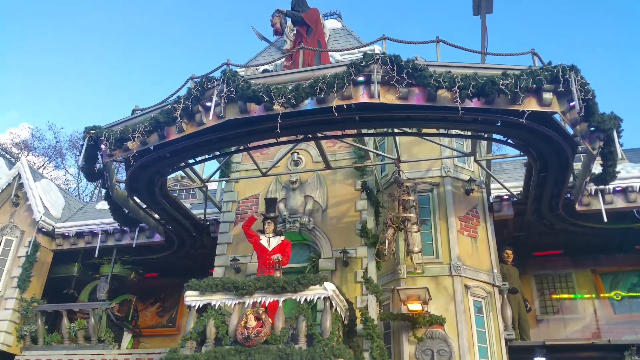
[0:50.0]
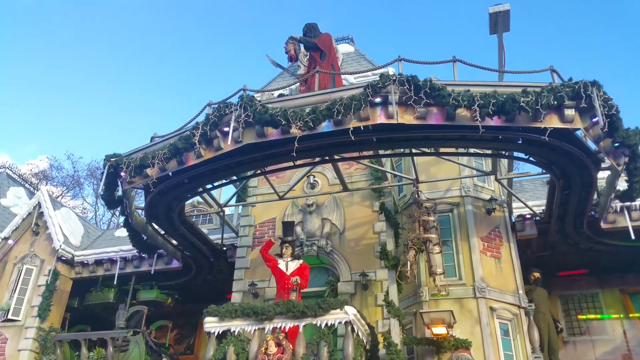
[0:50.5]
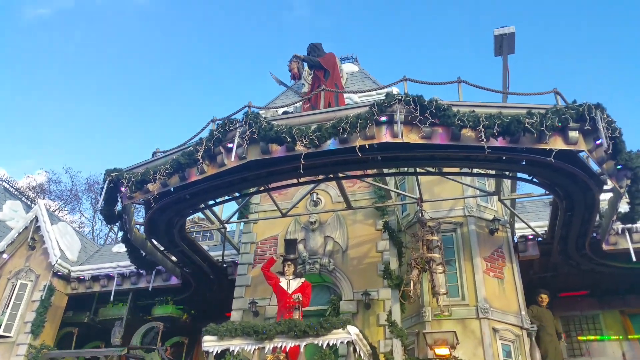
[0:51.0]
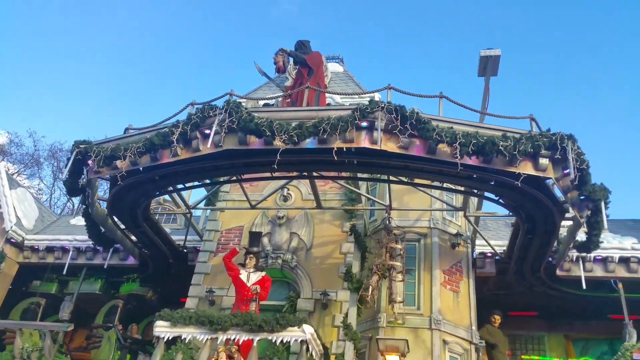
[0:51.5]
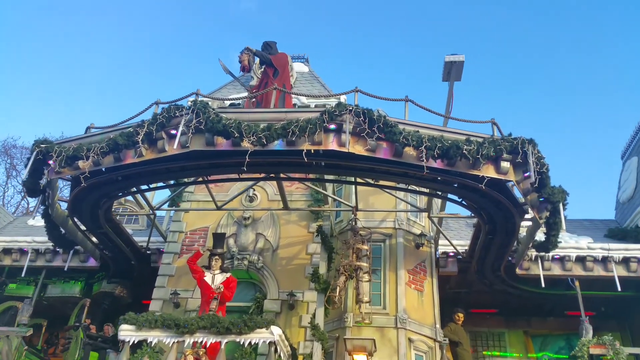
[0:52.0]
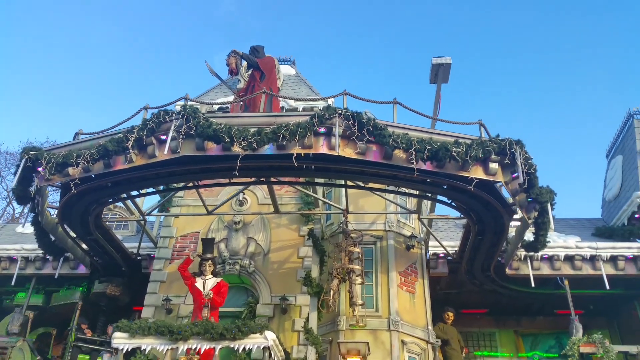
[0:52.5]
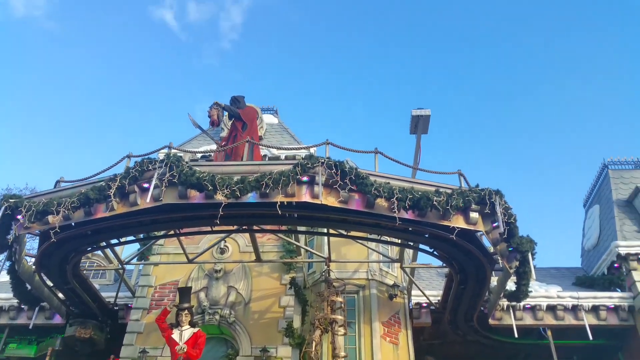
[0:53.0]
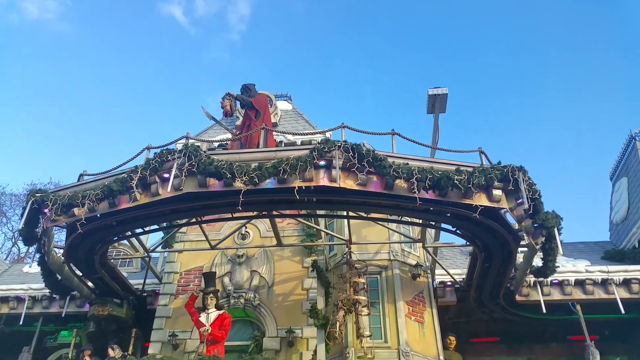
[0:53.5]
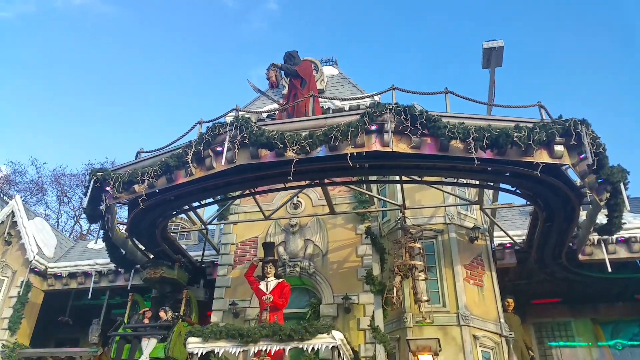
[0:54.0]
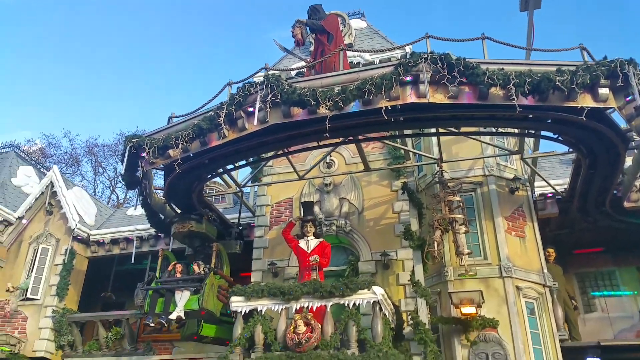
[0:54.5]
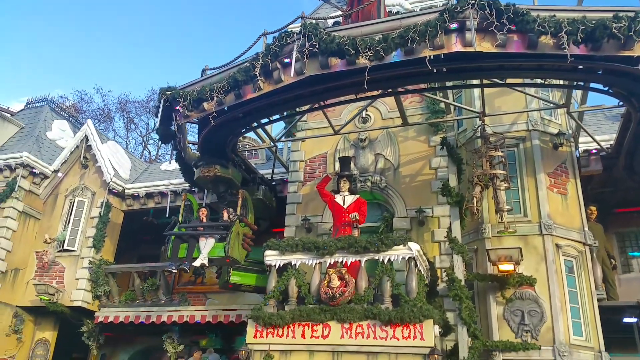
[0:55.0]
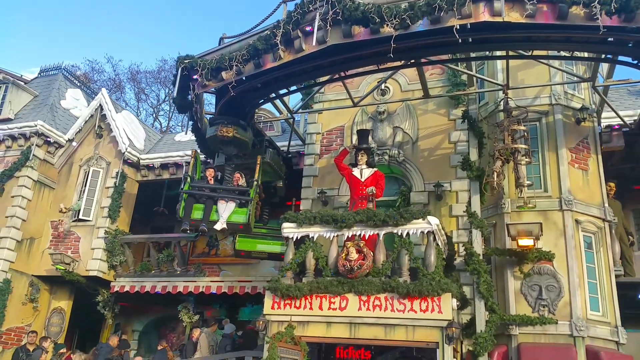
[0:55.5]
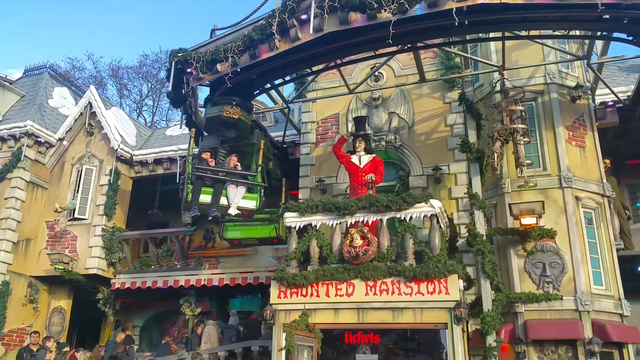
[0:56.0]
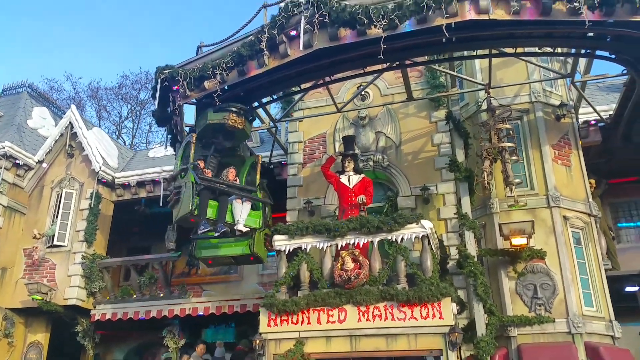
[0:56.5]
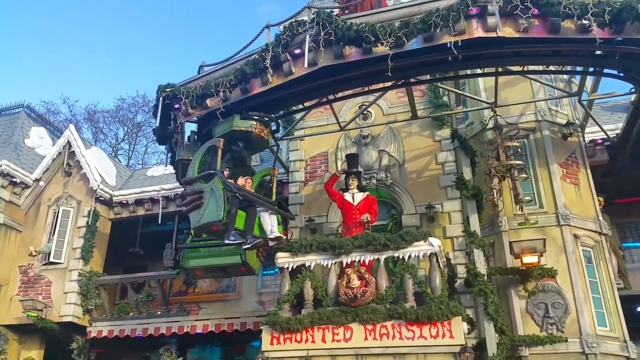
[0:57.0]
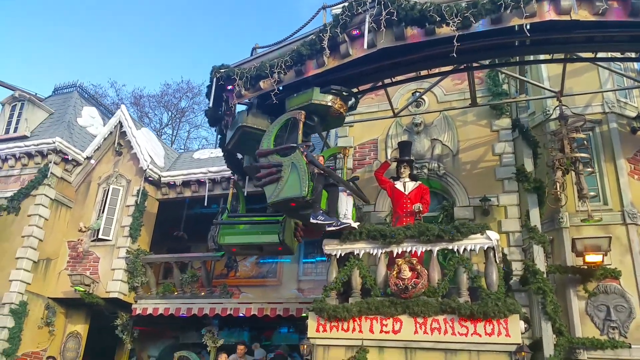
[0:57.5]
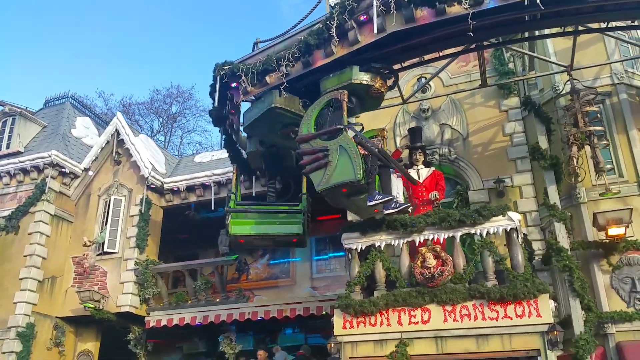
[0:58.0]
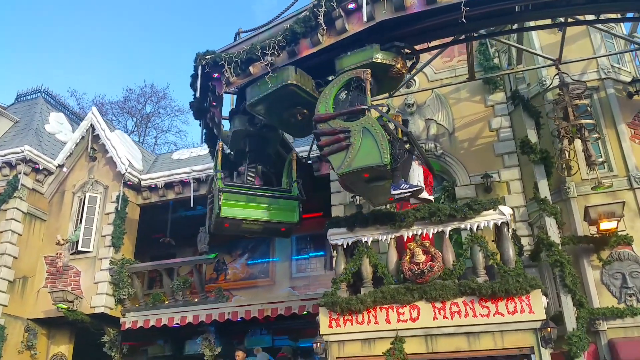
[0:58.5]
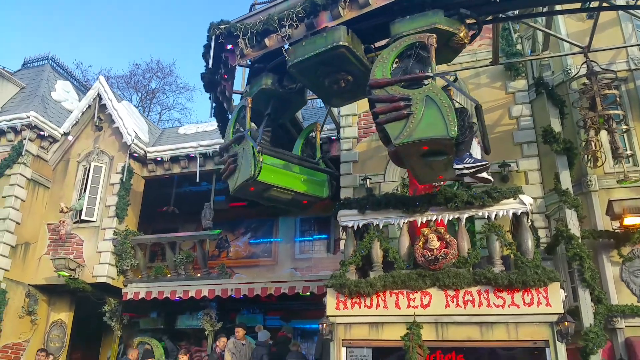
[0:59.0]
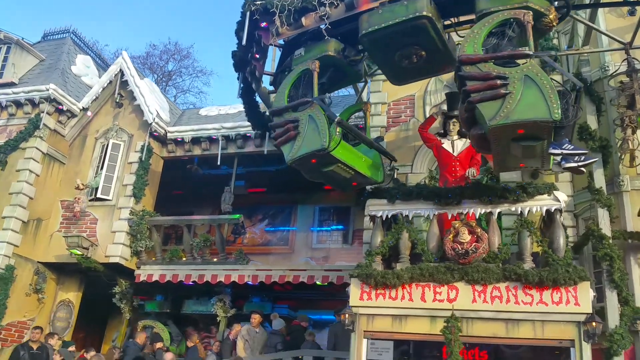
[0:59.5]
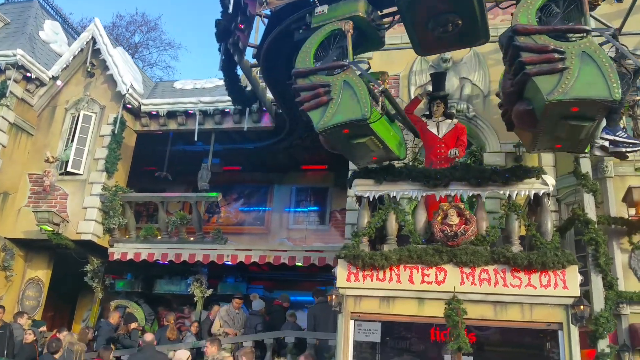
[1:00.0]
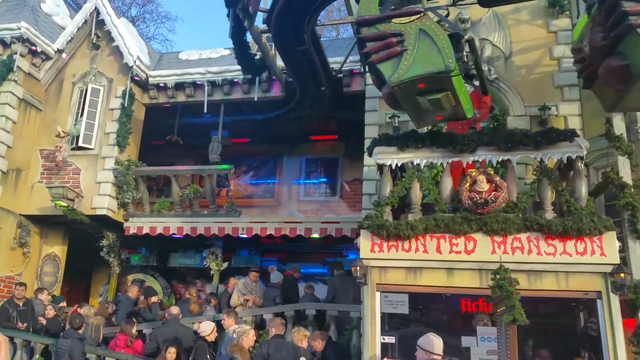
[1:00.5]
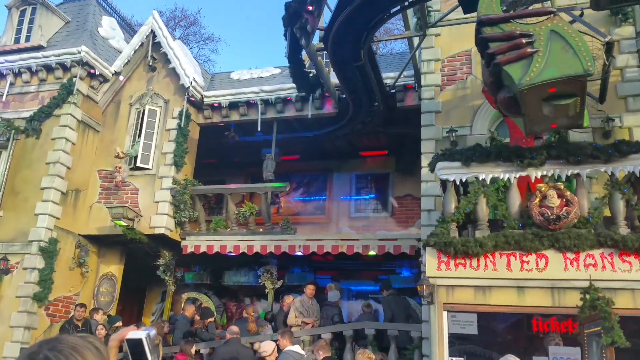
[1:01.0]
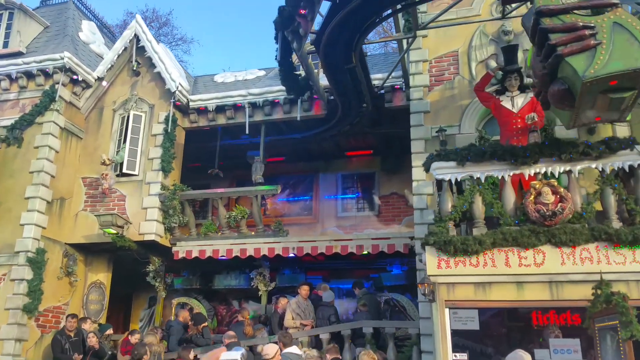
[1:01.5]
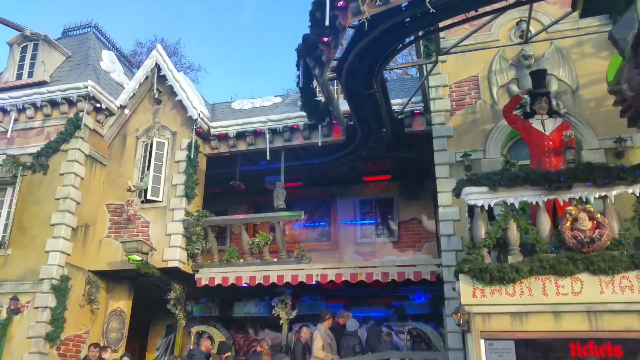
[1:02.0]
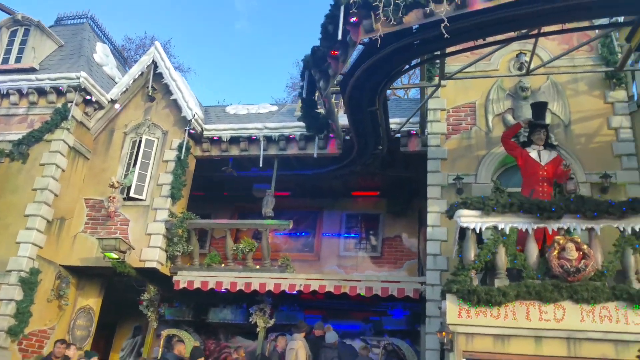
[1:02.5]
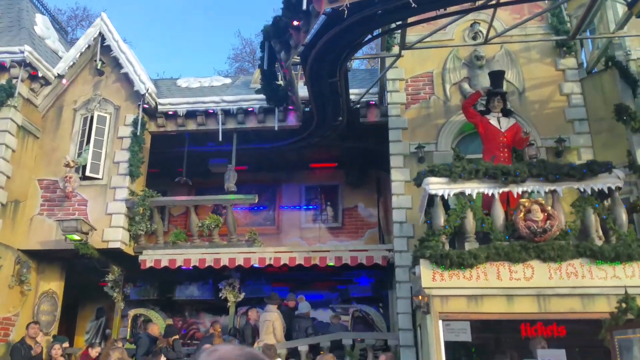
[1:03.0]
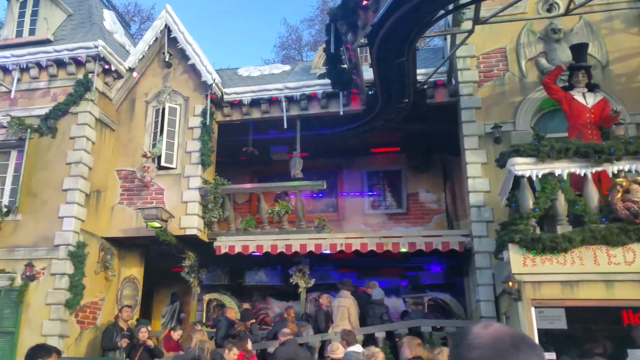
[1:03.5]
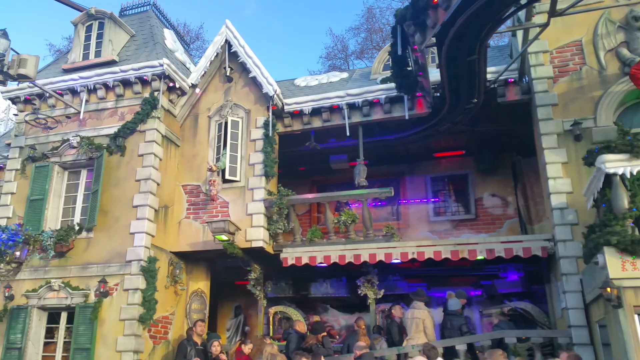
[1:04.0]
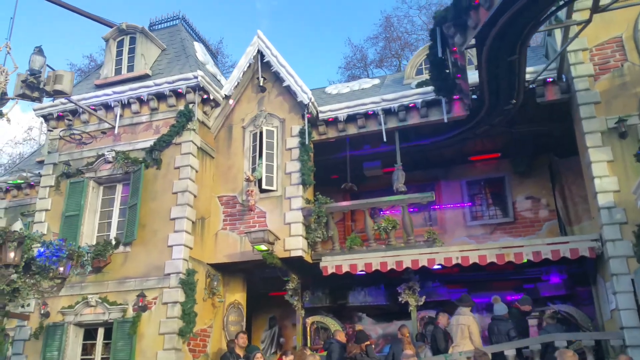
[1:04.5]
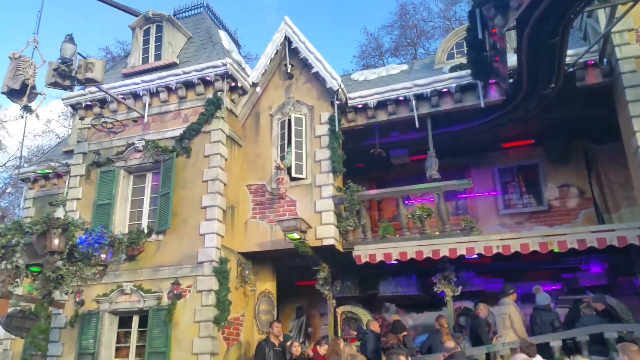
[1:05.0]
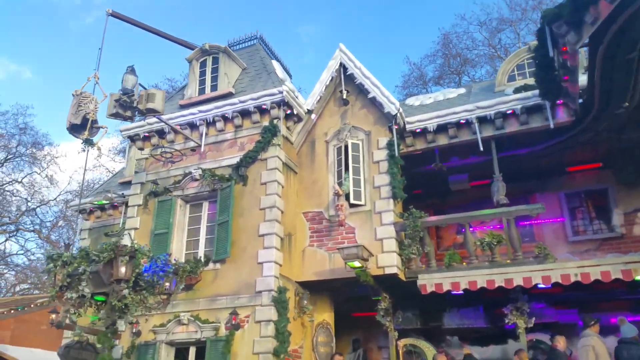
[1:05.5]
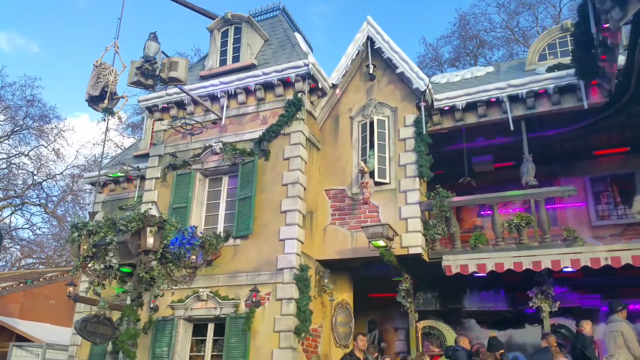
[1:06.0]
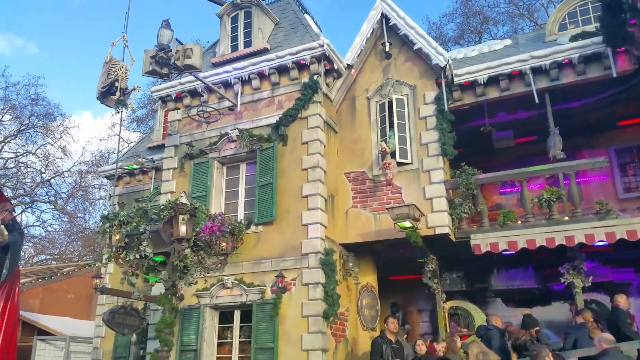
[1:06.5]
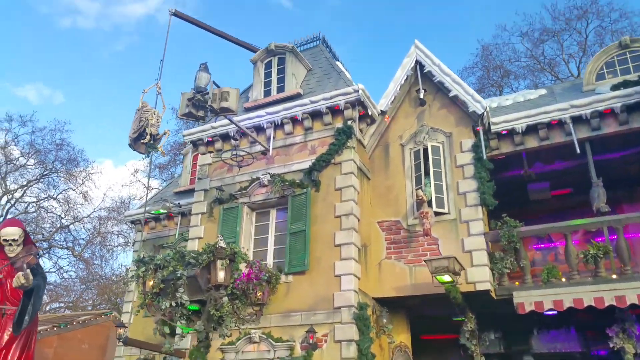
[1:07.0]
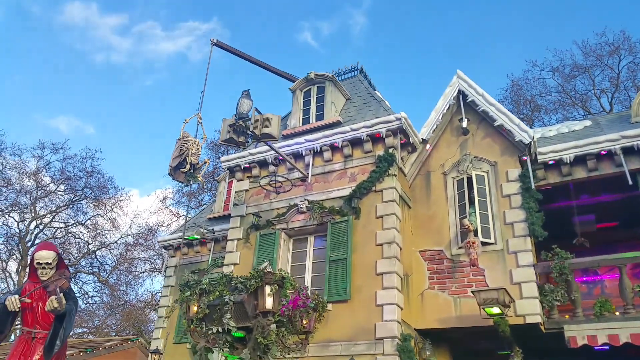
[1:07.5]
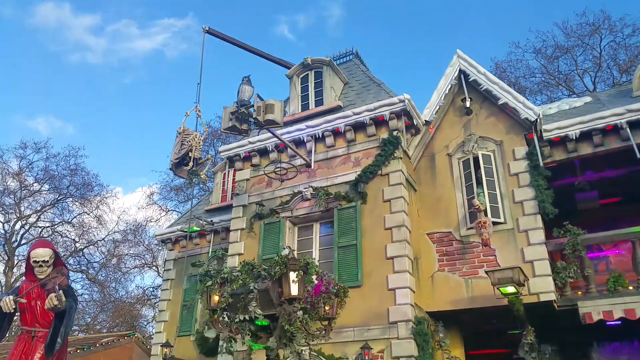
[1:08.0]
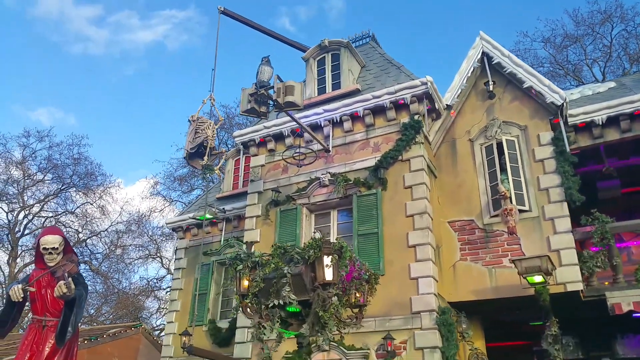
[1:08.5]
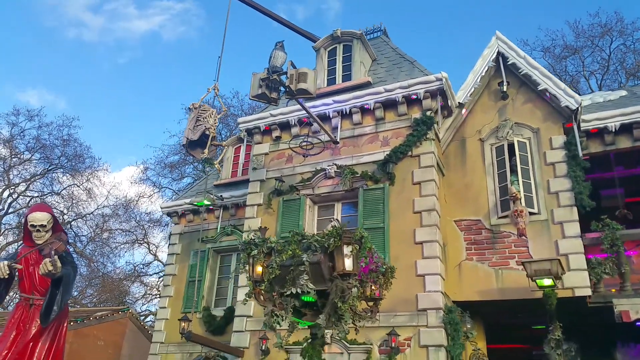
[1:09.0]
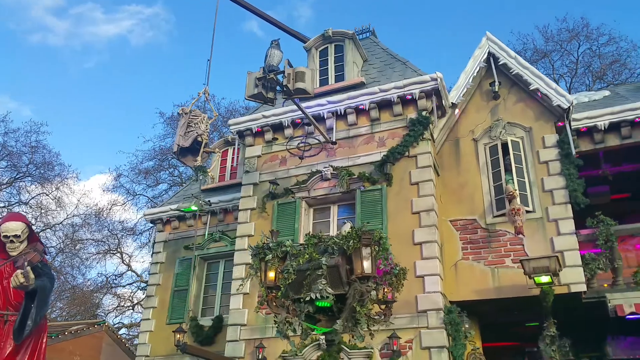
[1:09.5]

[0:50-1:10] The view is on the center of the home. A green trolley comes across the screen holding two people, while the back trolley is empty. The text "haunted mansion" is in the center of the home, underneath a balcony where a man dressed in red and white with a black top hat stands, pointing to or holding his hat. On the level above, on another balcony, a man in a red cloak takes off his mask and holds a sword. The trolley goes across through the rooms, and people on the lower level get a closer look at the mansion. A skeleton on some sort of lift goes up and down, appearing to hold onto its bones so they don't fall off; the skeleton goes down a rope that slowly descends from the roof of the mansion.